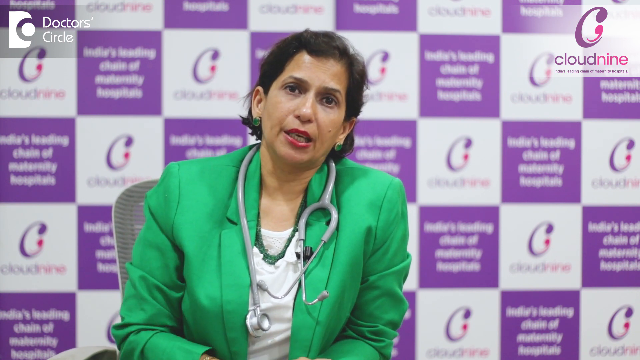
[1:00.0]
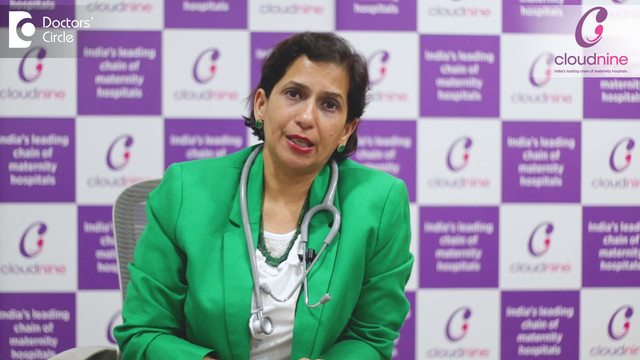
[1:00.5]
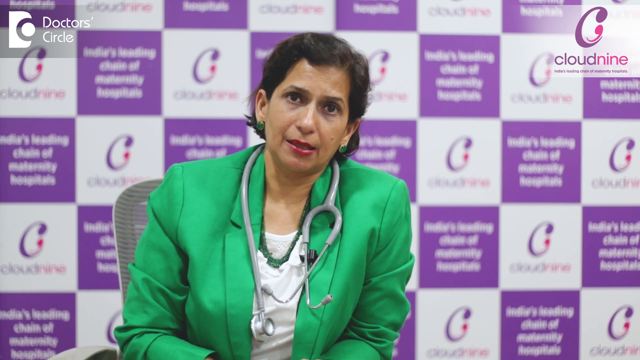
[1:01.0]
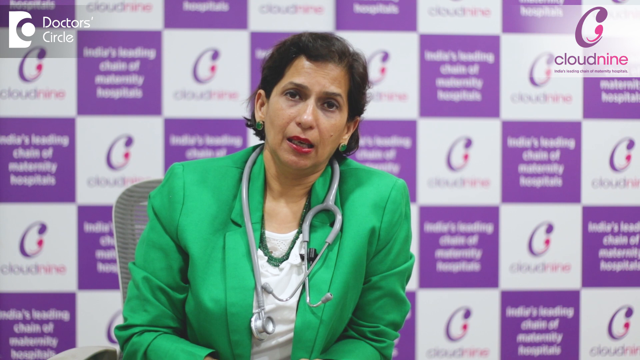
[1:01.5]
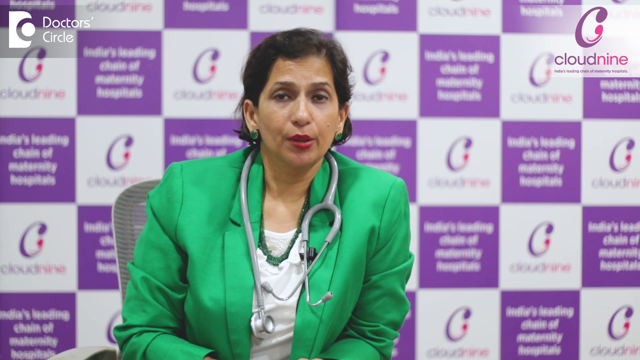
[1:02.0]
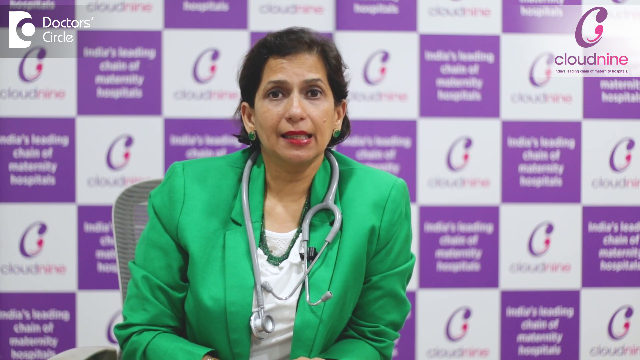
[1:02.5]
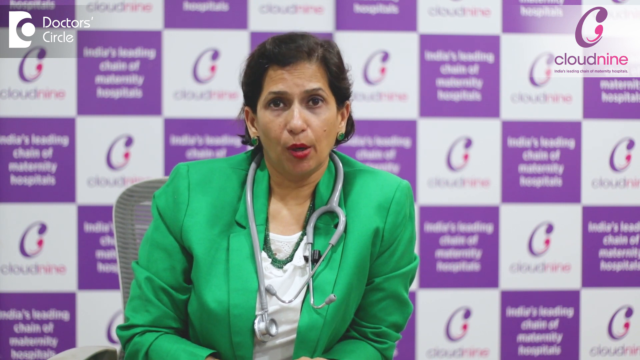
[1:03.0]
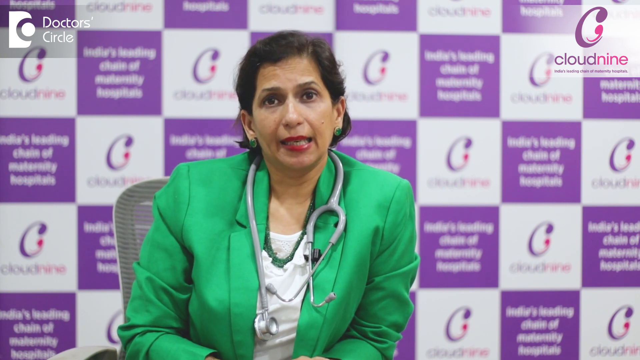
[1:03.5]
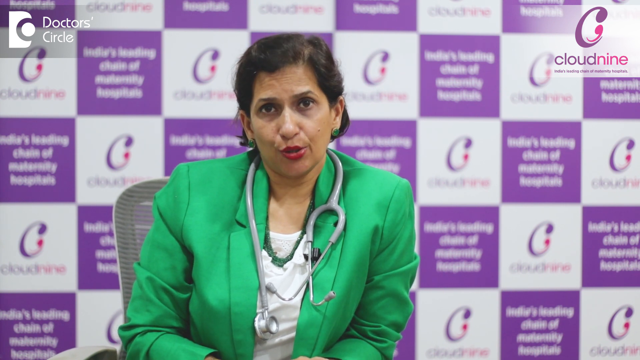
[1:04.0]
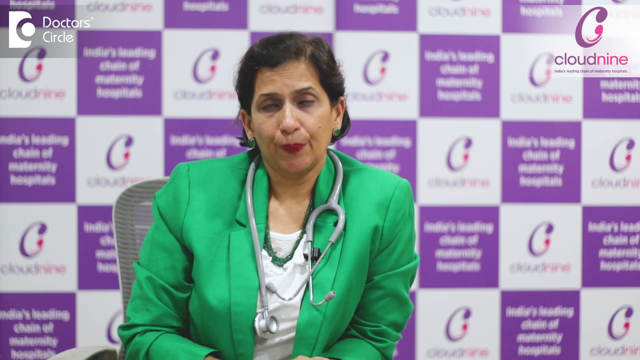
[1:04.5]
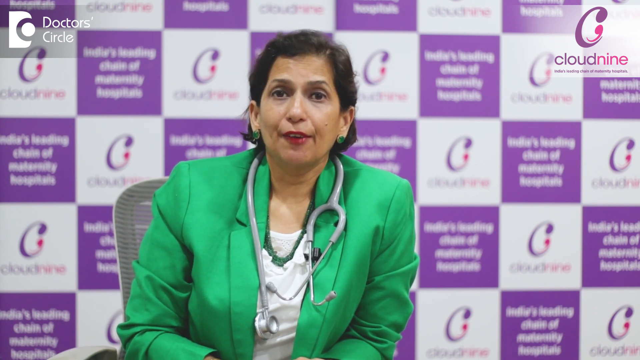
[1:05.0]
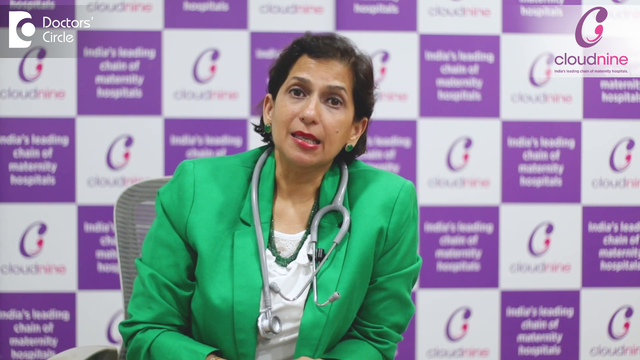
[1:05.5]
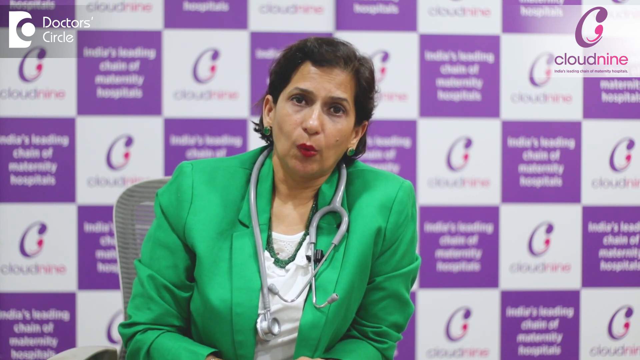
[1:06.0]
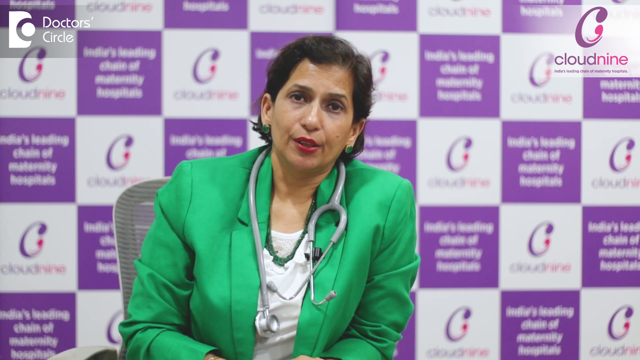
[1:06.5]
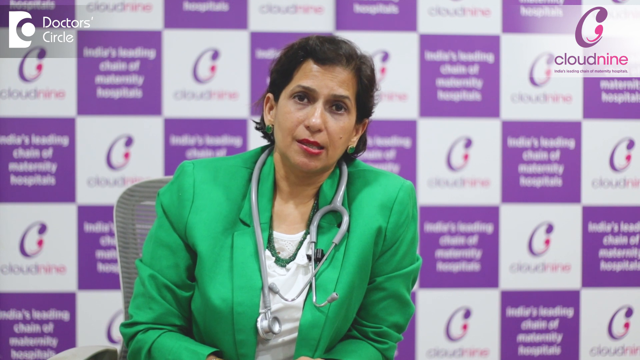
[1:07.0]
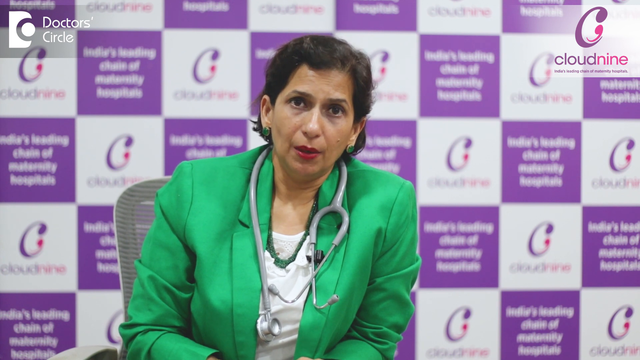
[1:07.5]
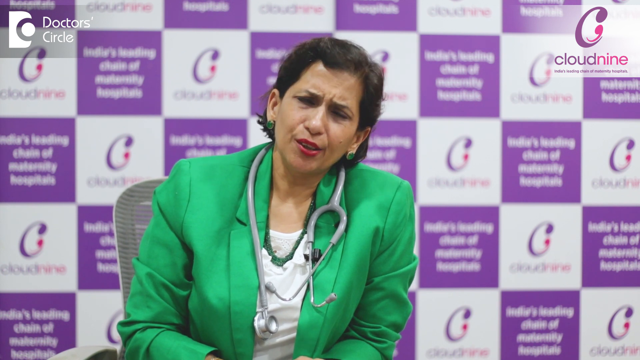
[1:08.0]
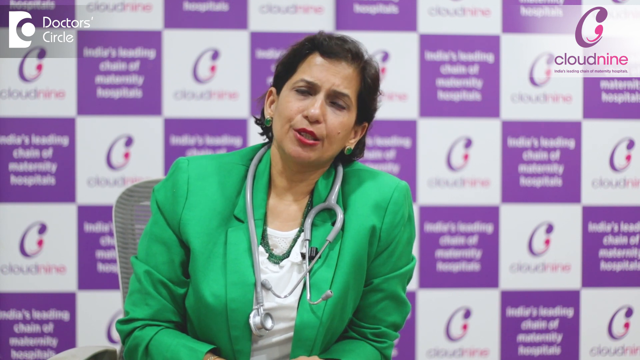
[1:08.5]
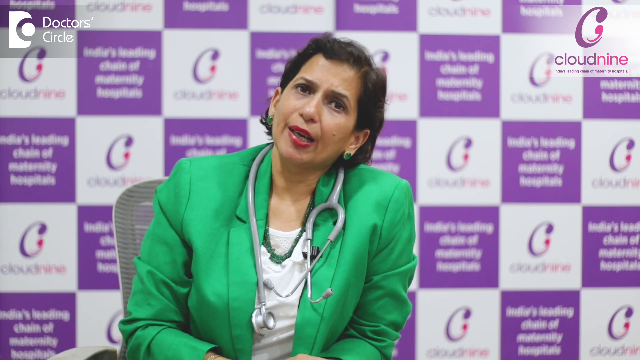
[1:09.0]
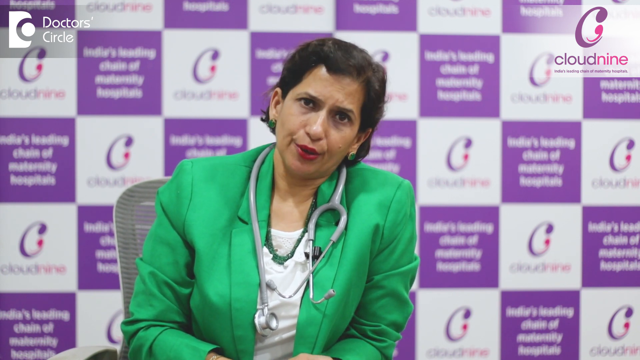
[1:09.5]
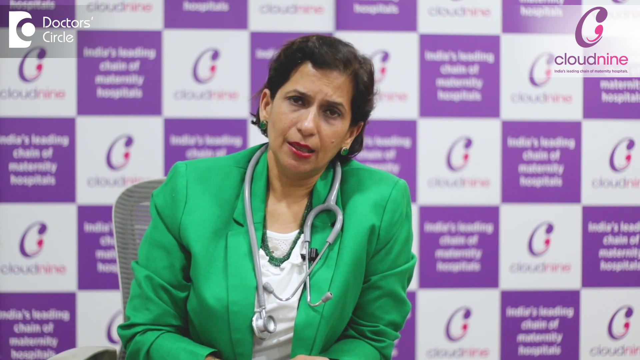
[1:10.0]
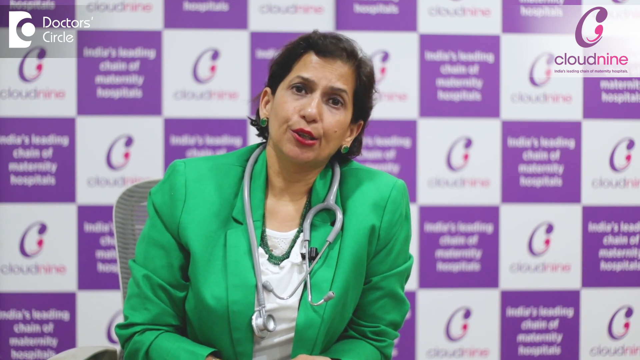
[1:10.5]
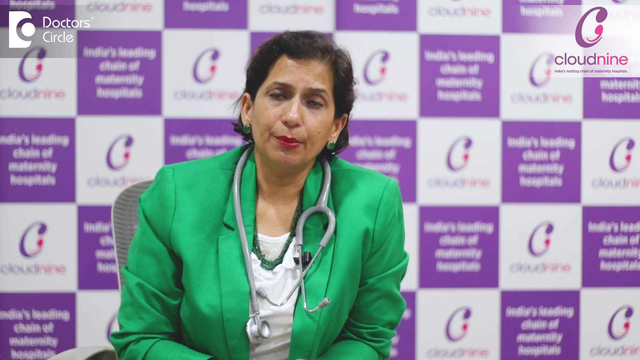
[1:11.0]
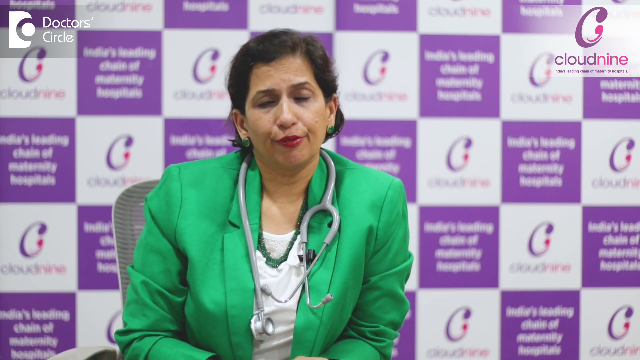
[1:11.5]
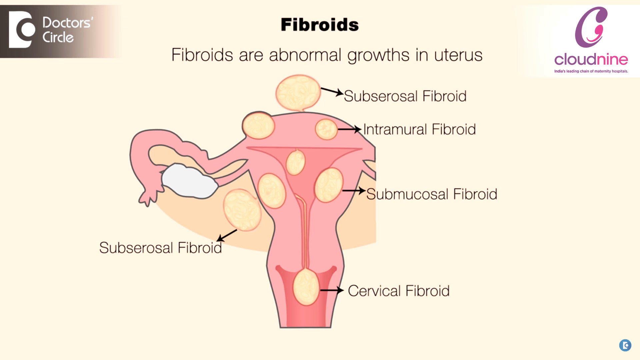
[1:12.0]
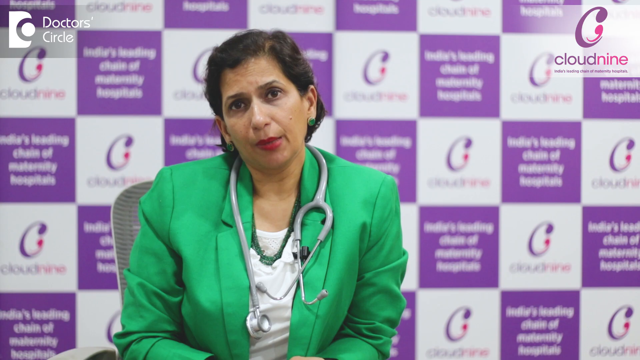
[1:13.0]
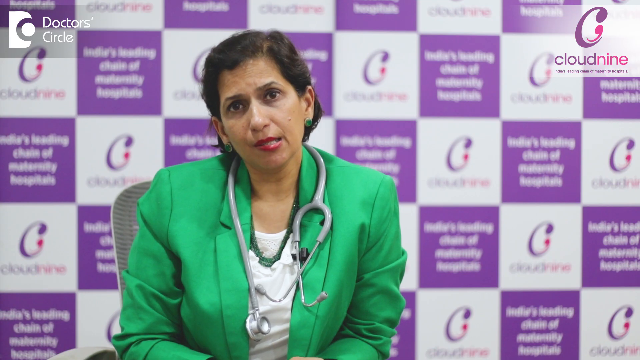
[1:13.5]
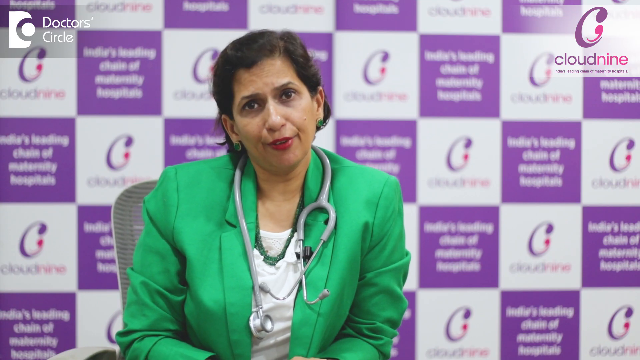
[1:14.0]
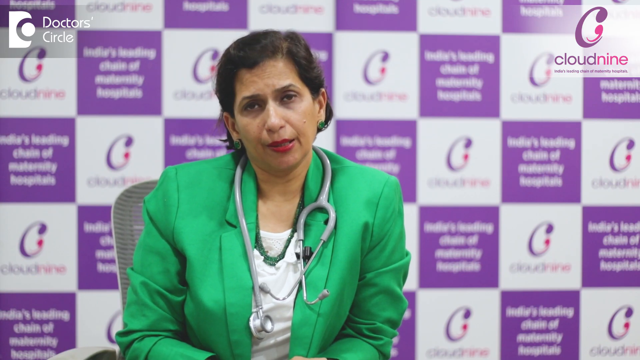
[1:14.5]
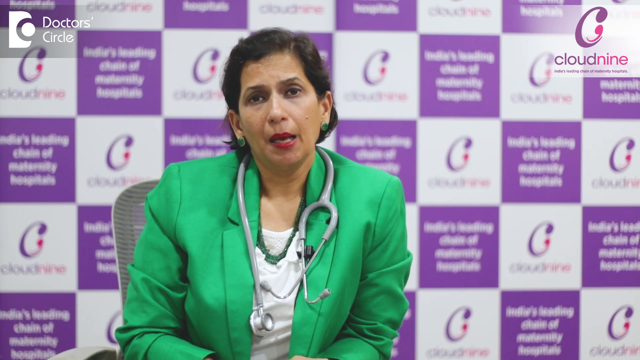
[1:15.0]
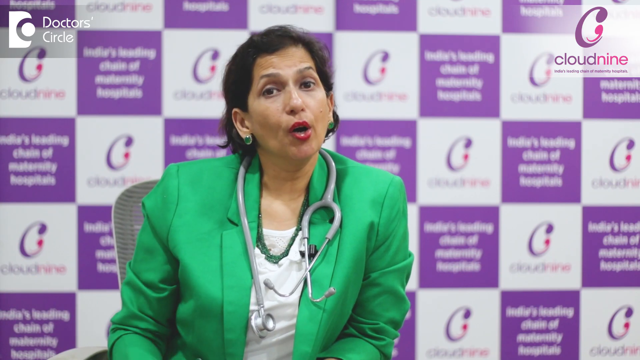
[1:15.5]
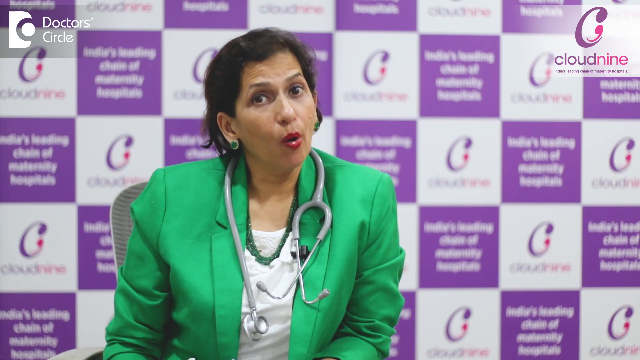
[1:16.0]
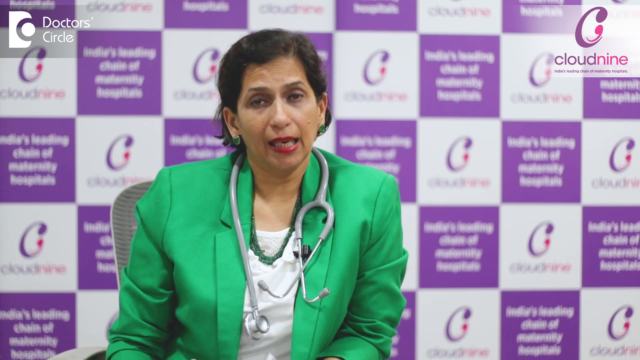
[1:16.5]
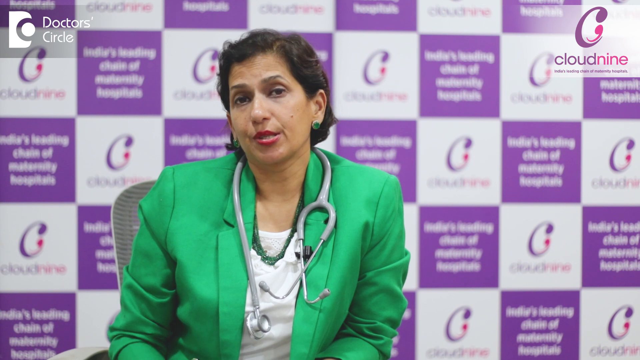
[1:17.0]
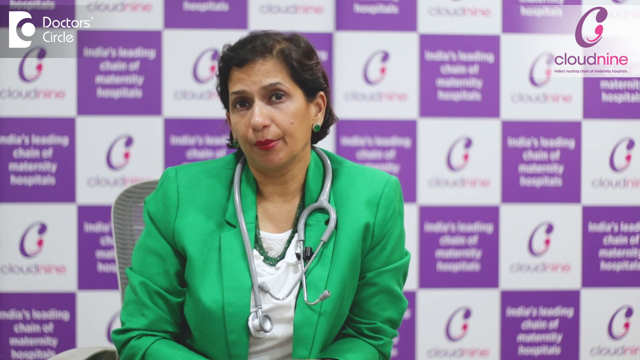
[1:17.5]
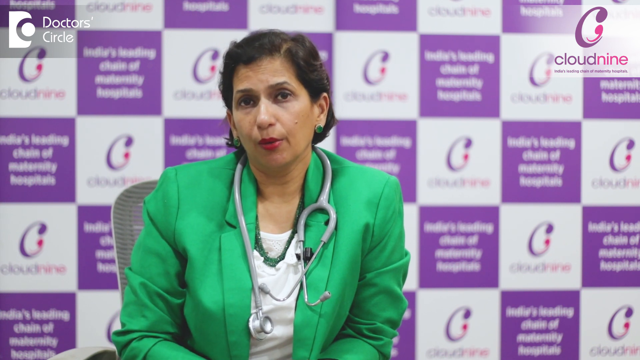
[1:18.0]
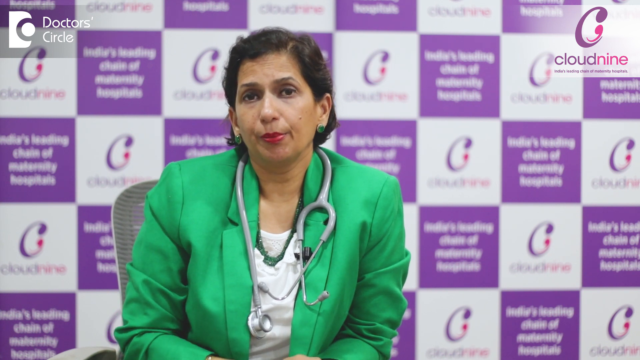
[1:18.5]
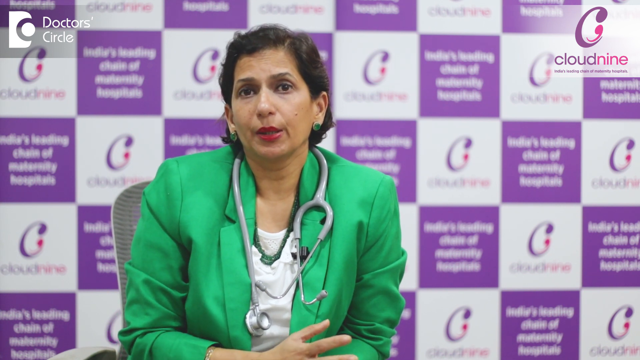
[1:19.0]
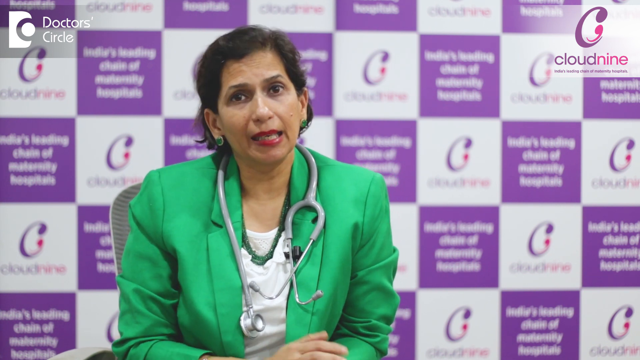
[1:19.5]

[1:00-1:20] A woman in a green blazer, with black hair combed behind her ears, green earrings, a grey stethoscope around her neck and a green necklace, talks to the camera. Her body is still and her head tilts strongly to her left, her left ear down close to her left shoulder. She moves her head up to the center while her shoulders stay hunched and slightly shifted left. She looks like she is leaning slightly forward, perhaps resting her unseen left elbow on a desk in front of her, with her body weight definitely to the left. As she talks, her head tilts left, moves back right just enough to straighten, then tilts left again. The video cuts to an animated image with the text "fibroids" at the top, followed by text reading "fibroids are abnormal growths in uterus". The image shows a pink uterus containing egg-shaped oval white or yellowish-white balls, with text and lines labeling the fibroids: subsurosal, intramural, submucosal, cervical and subsurosal. Back on the speaker, her body is still weighted left, her left shoulder seems tilted down, and she looks like she could be resting her right elbow on a desk in front of her. Her head now tilts to her right, away from the lean of her body. She leans forward very slightly with her head tilted right, and there is a brief shake of the head. At the bottom of the frame her upright thumb comes into view as the hand moves around, mostly out of frame. She then makes a slight nodding gesture toward the screen.